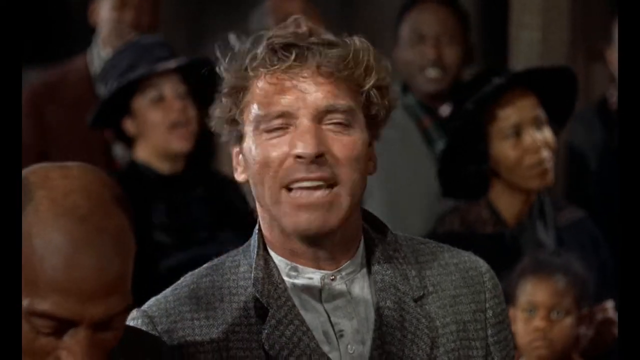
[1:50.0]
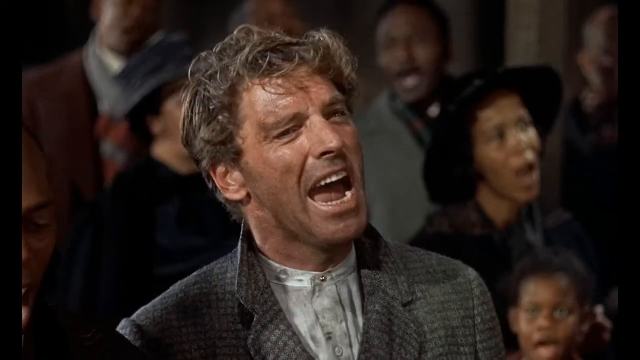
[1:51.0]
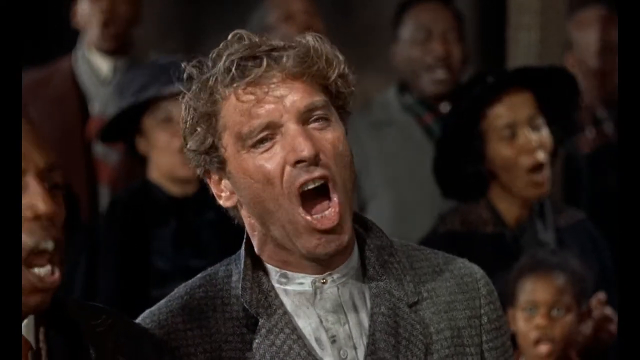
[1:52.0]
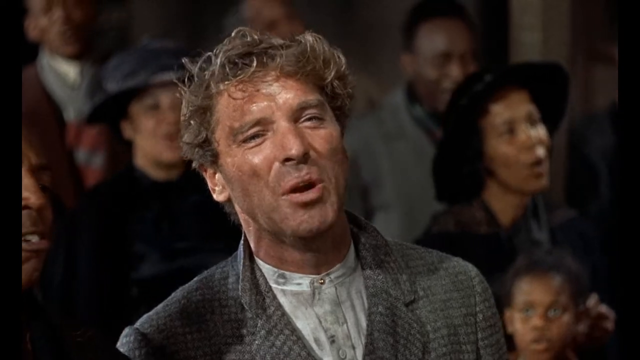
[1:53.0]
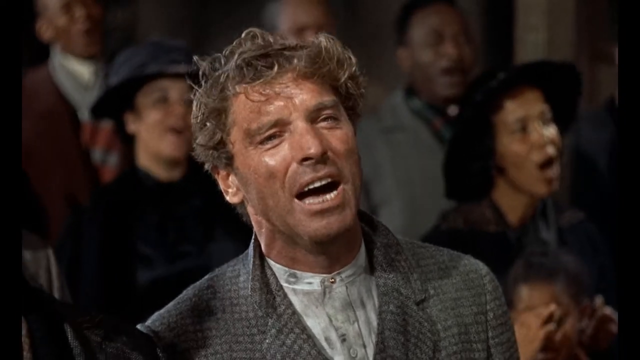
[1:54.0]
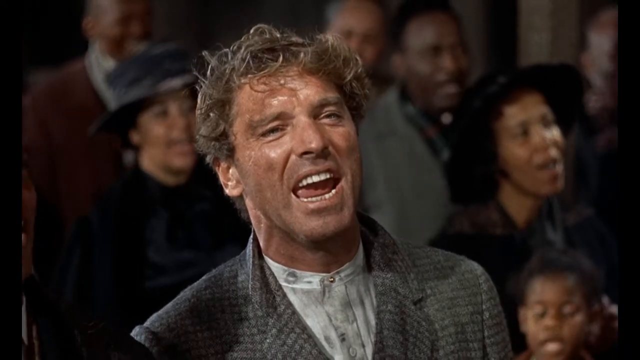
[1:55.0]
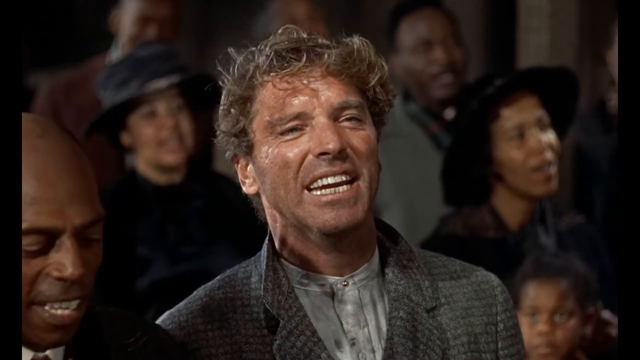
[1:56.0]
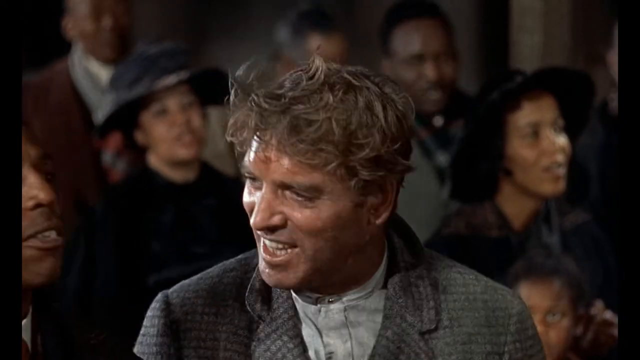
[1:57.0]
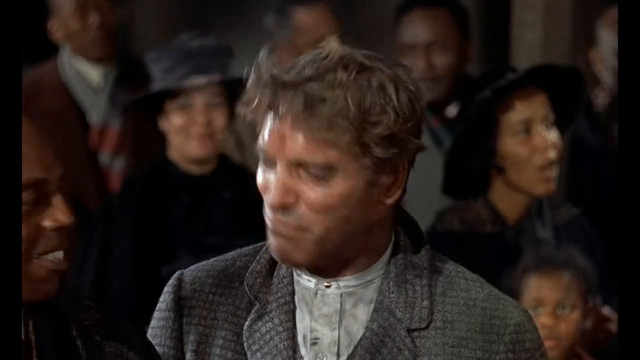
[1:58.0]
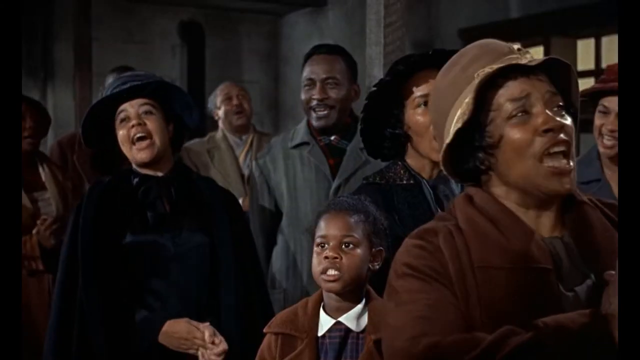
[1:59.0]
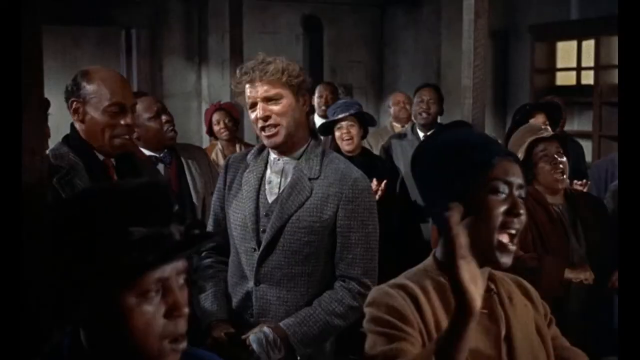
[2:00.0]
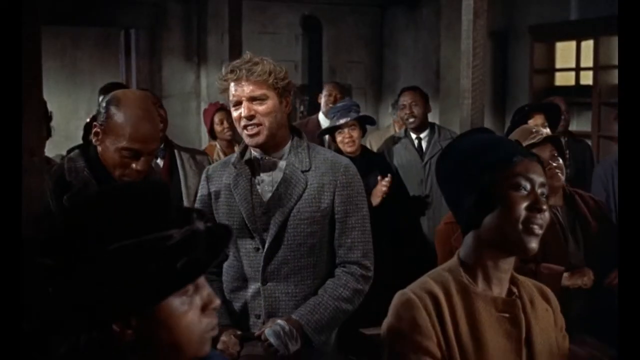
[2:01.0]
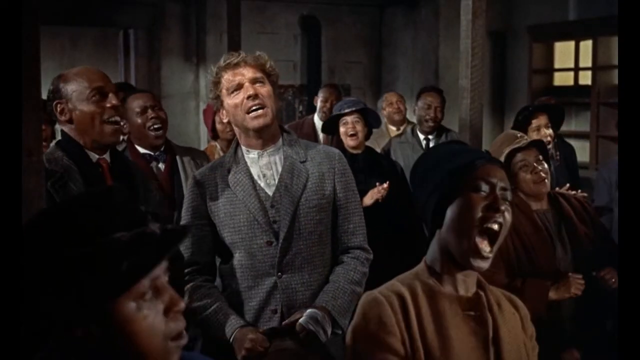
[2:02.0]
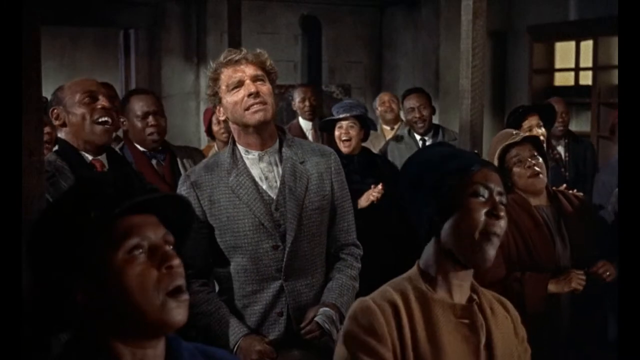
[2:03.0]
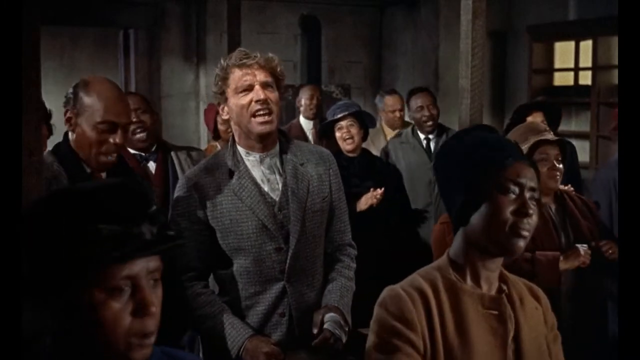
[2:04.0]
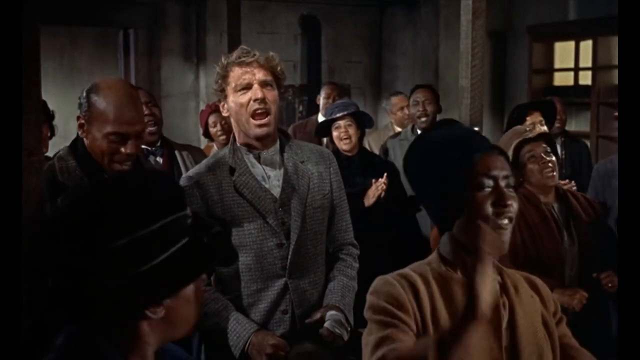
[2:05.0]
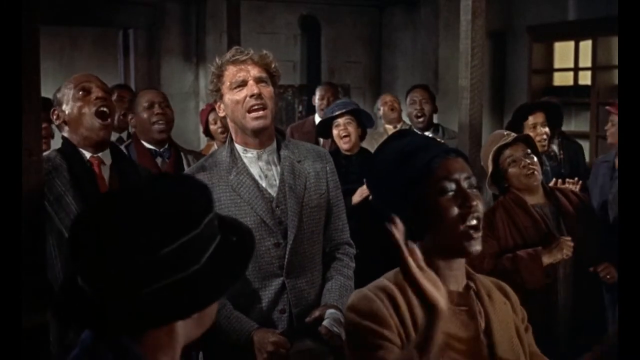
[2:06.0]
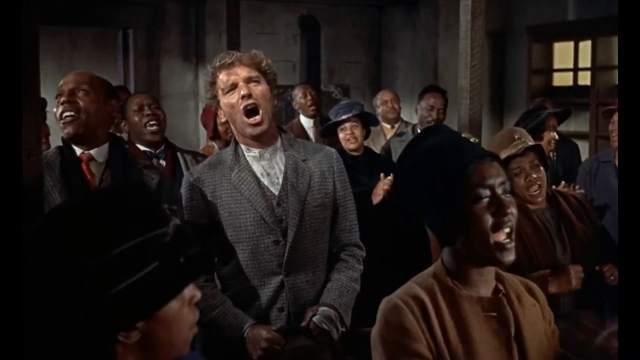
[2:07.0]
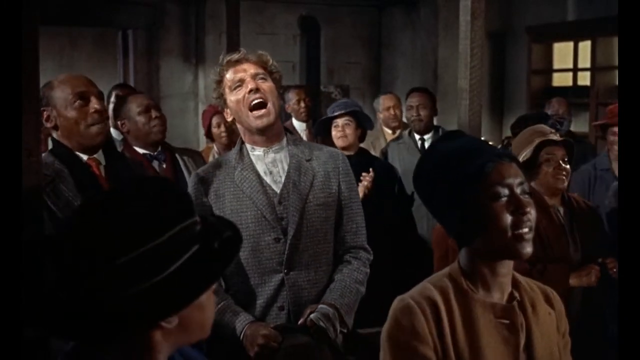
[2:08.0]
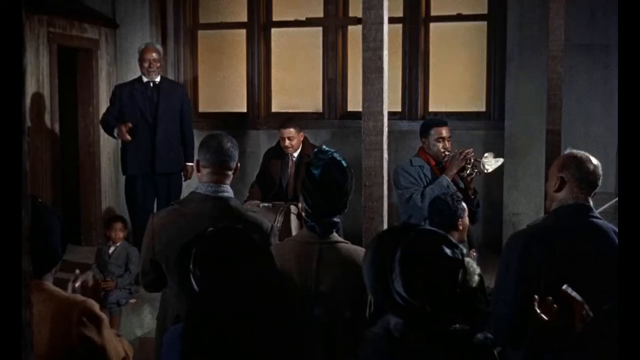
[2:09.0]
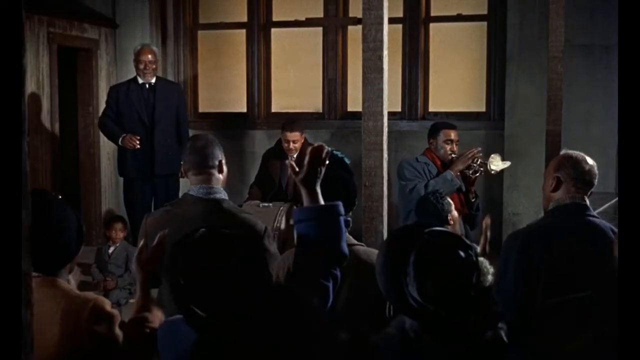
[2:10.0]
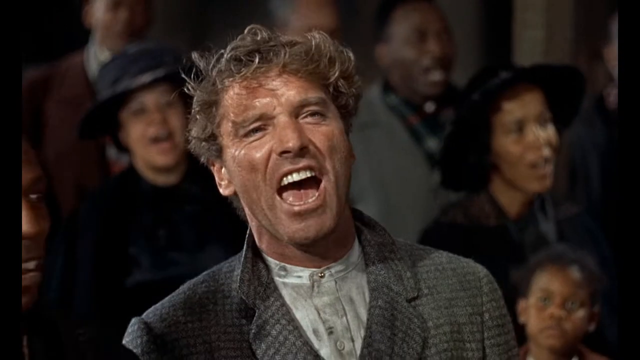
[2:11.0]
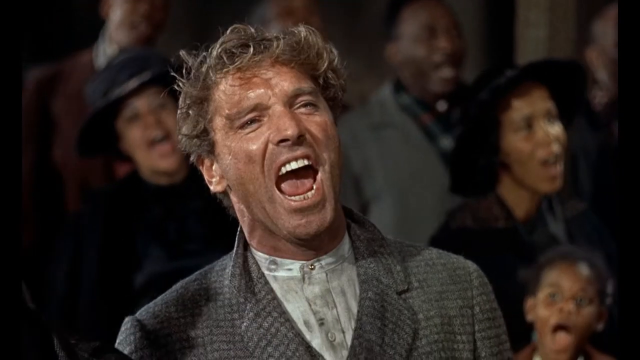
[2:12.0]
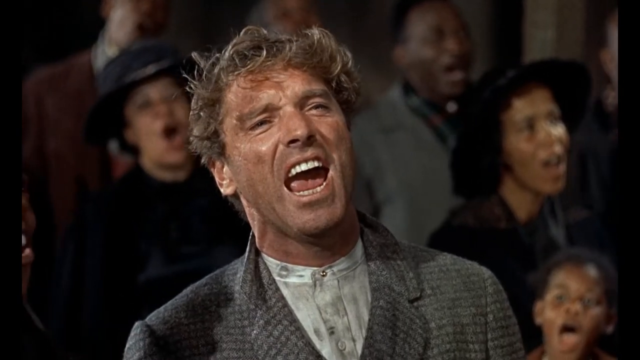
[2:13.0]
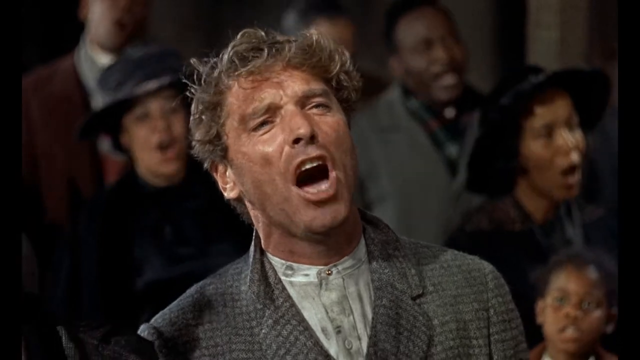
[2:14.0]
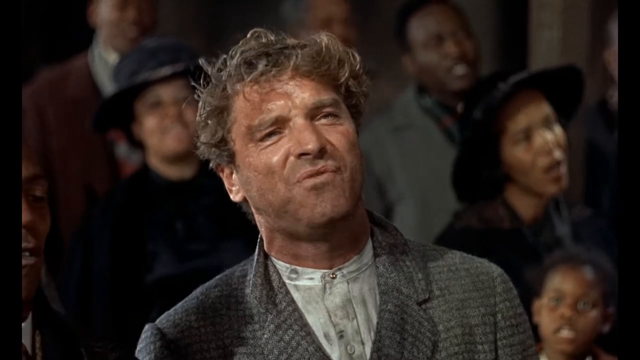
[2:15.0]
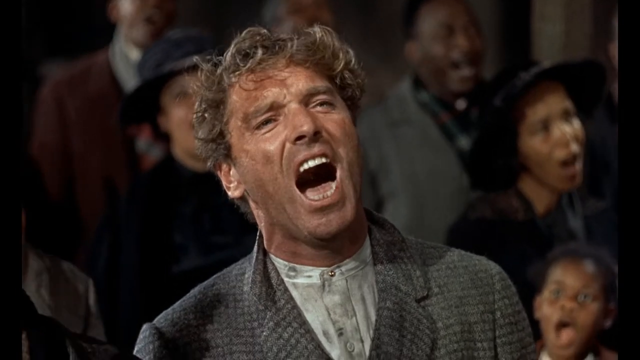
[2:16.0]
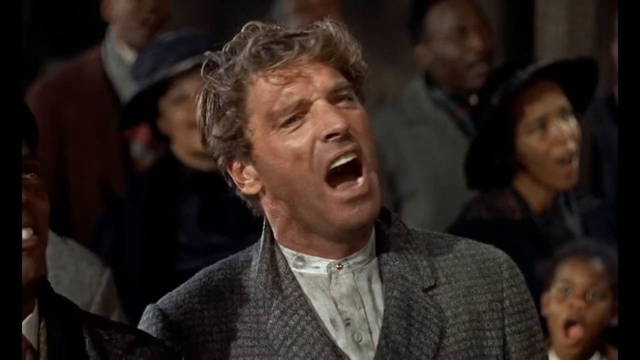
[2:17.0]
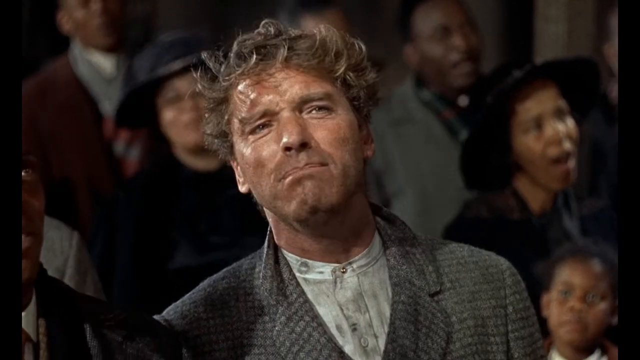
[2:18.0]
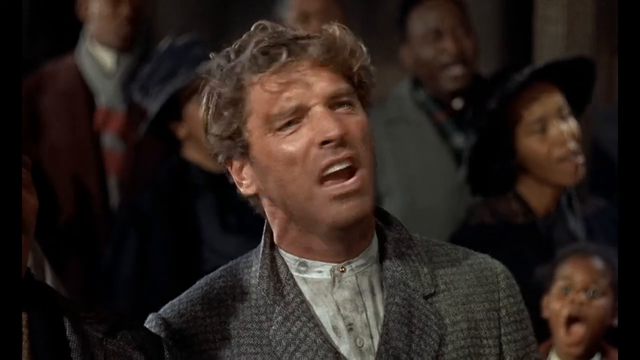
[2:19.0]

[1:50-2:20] The man continues to sing strongly, looking at the man next to him and singing even louder, seemingly giving him a look that says he is with him. He looks forward, and all the people in the room can be seen, with a woman in front of him clapping very loudly and singing very loudly. The man next to him is also singing very loudly. Everyone seems to be enjoying themselves. The camera once again pans back to the man's face, his expressions now deeper and stronger and looking like anger. He seems to be getting involved with all the people around him.